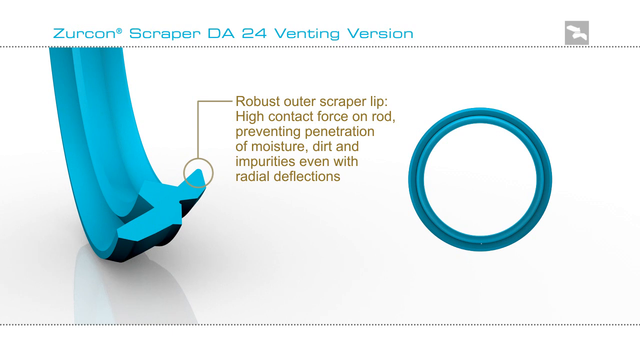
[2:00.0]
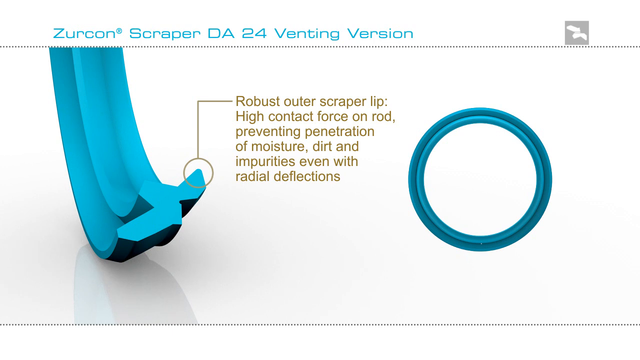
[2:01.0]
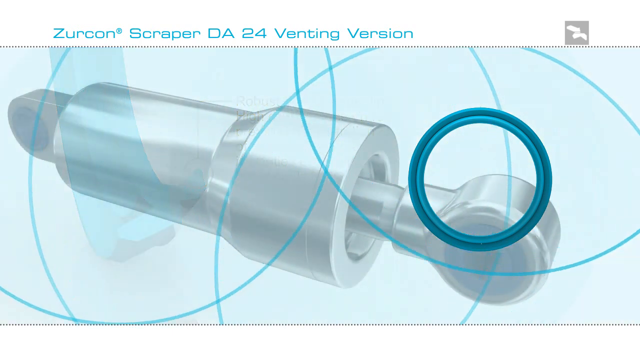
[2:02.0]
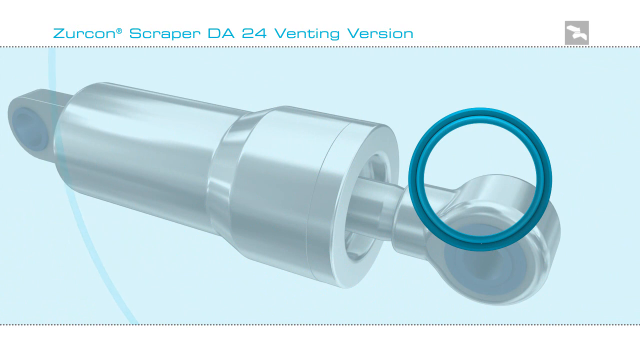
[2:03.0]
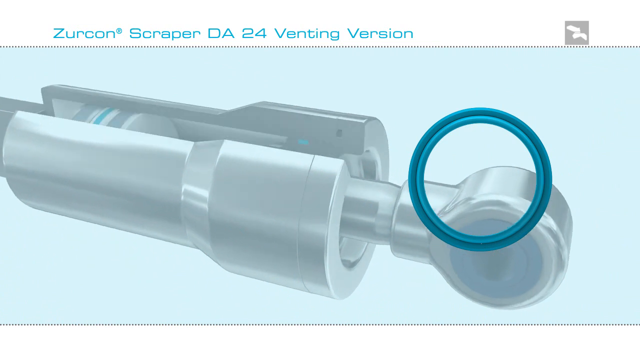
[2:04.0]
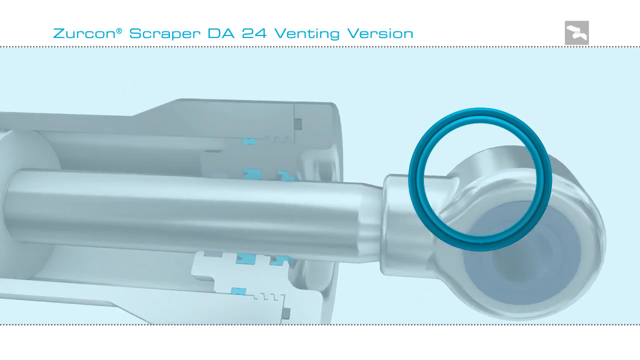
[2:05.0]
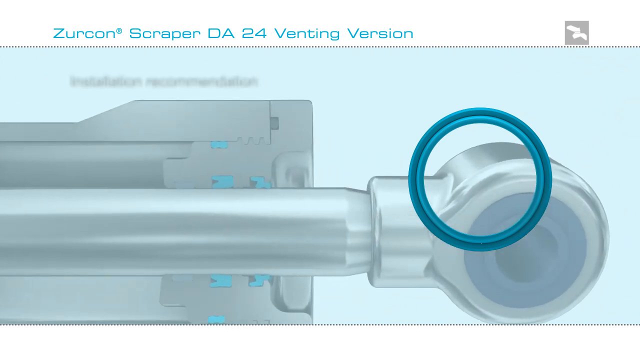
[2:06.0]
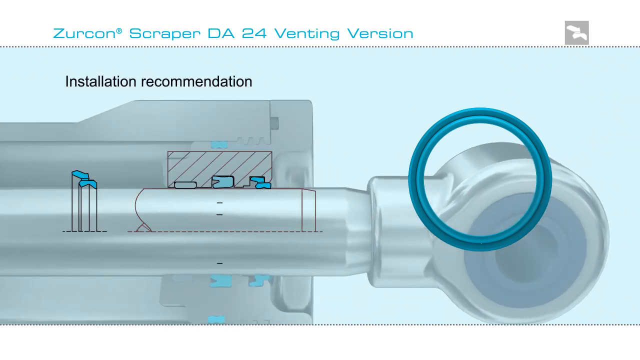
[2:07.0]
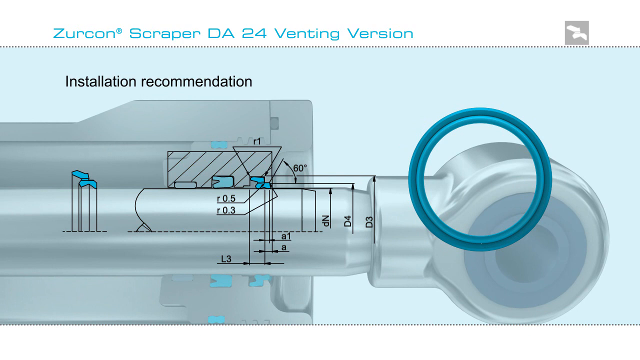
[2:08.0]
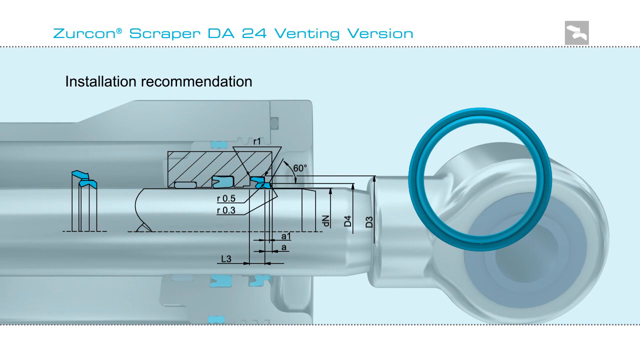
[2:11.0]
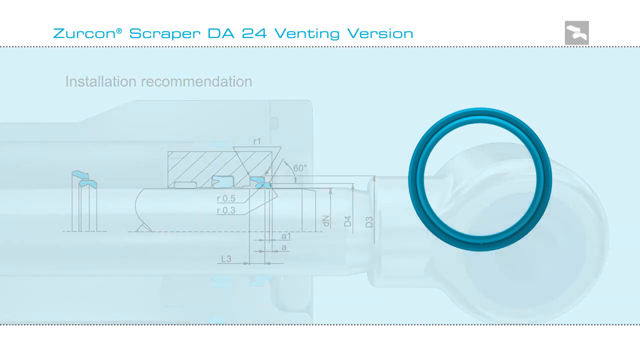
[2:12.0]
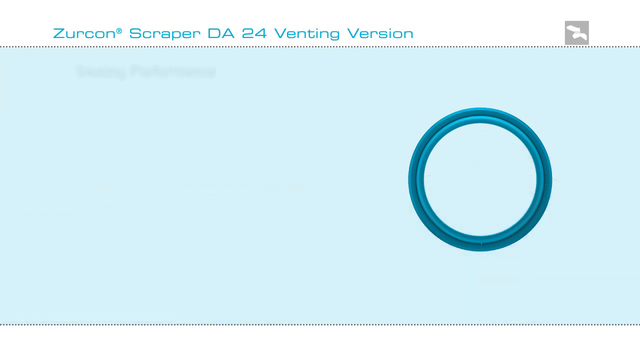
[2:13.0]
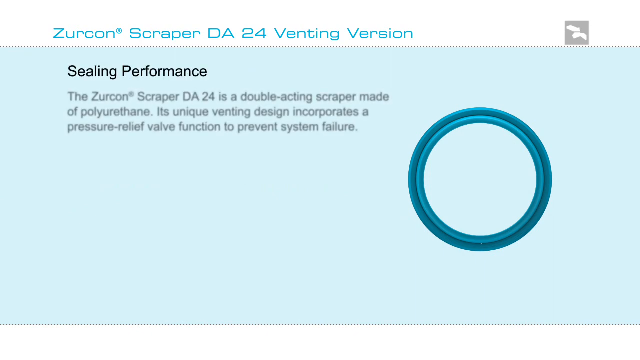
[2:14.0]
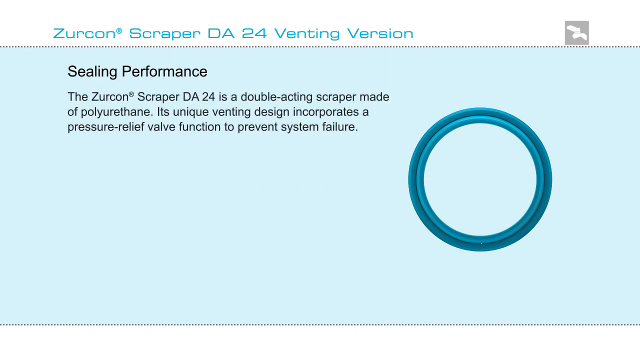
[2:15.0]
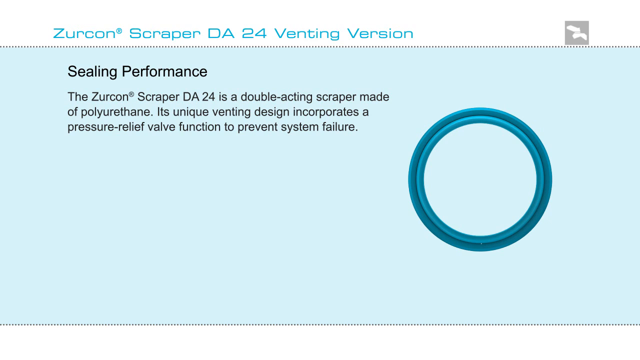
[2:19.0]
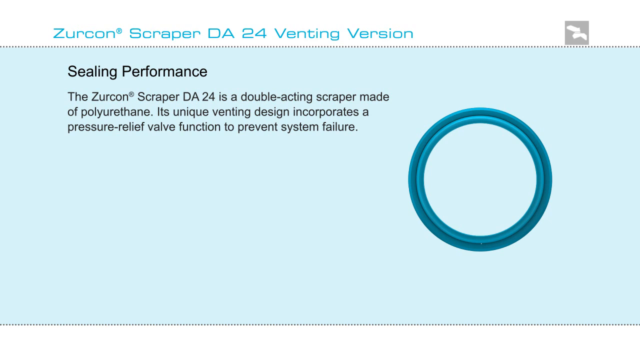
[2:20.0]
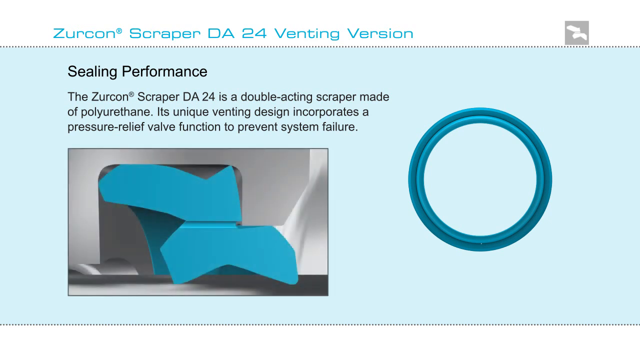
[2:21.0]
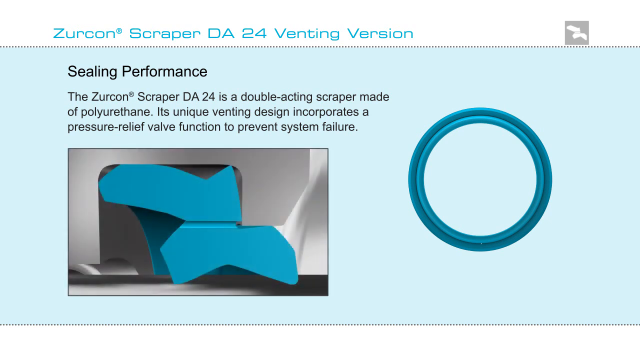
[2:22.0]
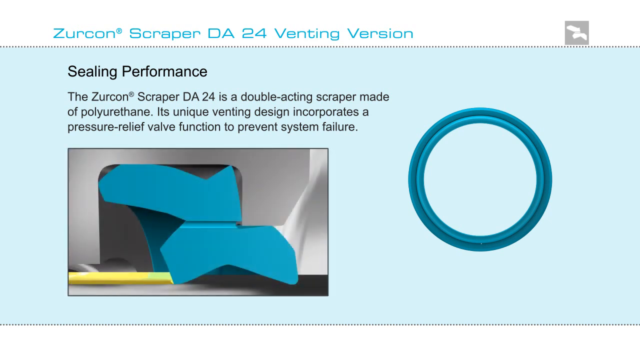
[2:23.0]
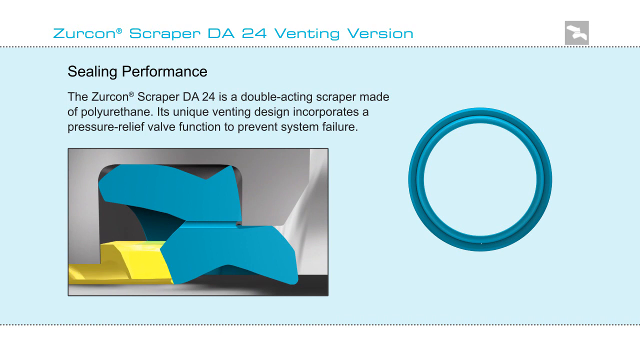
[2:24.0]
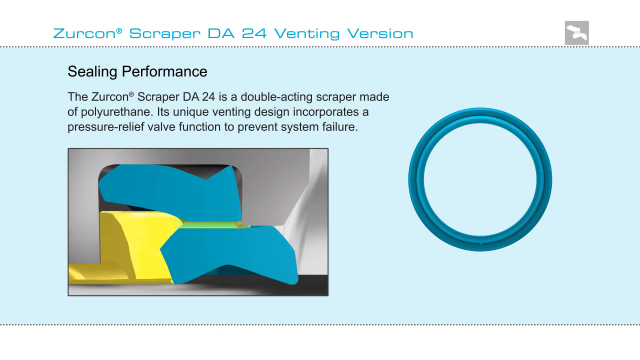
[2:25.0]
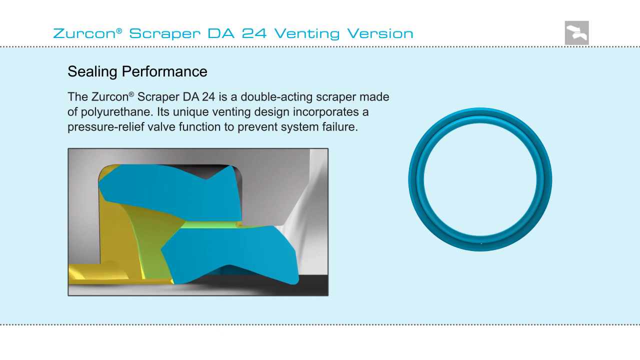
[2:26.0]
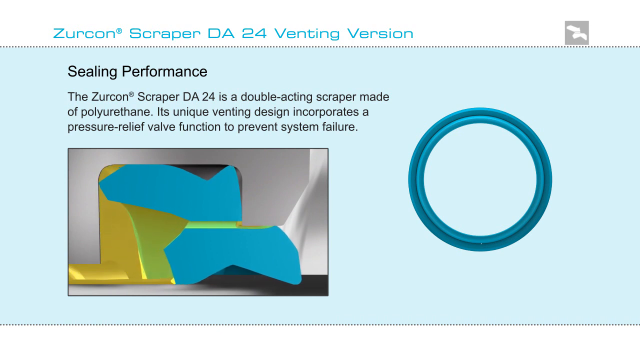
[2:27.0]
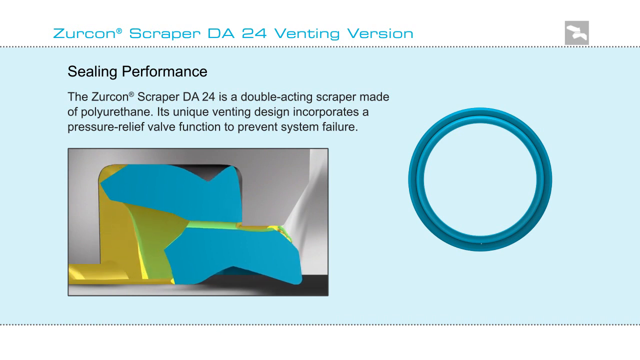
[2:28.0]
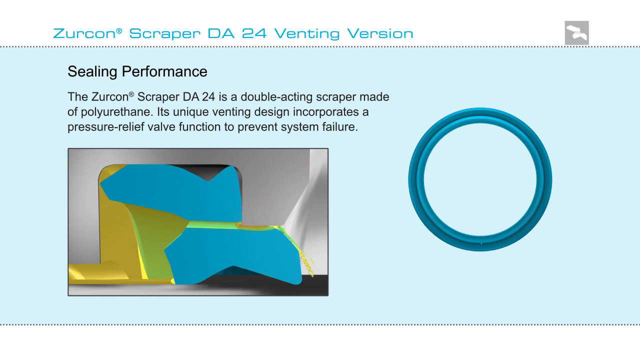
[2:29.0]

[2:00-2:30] A slide has light blue text at the top reading "Zircon Scraper DA-24 venting version" on a white background, with a light blue piece that looks like metal, seemingly cut in half, with a sort of crest shape. On the right side is a blue circle, and a line points to that part with text reading "robust outer scraper lip high contact force on rod preventing penetration of moisture dirt and impurities even with radio deflections". The slide disappears, a bunch of blue circles pop in, and a completely silver part for a tractor is shown being opened up in computer-generated form, with a blue circle still in the front. Its different compartments are outlined in black along with some numbers. Underneath there is a paragraph explaining what is in a box below, which holds another image that is silver and blue, and some yellow parts rise up from the bottom.